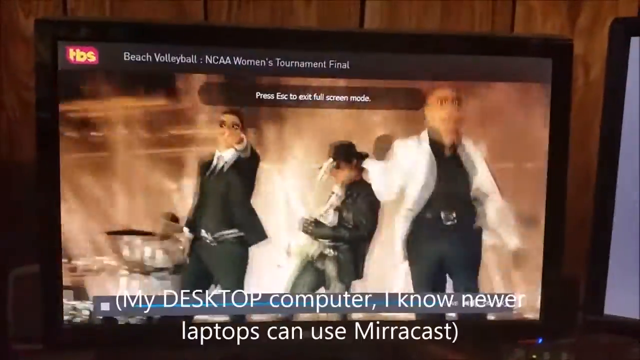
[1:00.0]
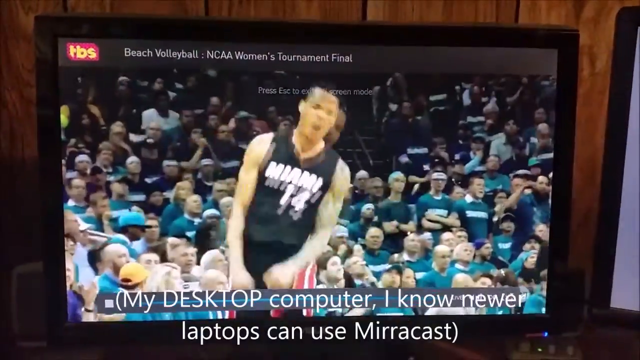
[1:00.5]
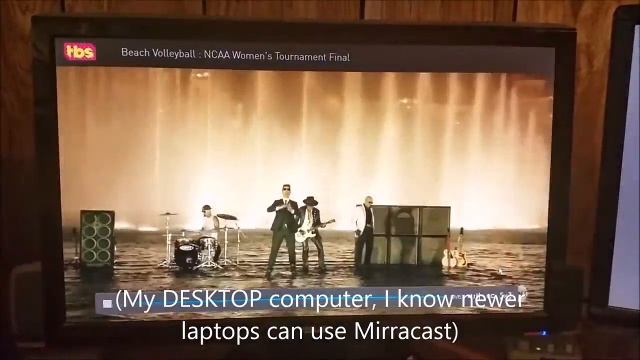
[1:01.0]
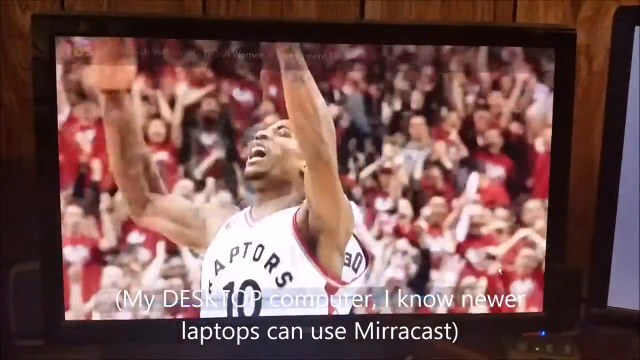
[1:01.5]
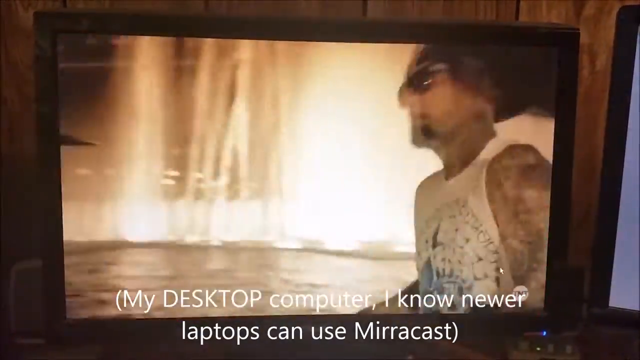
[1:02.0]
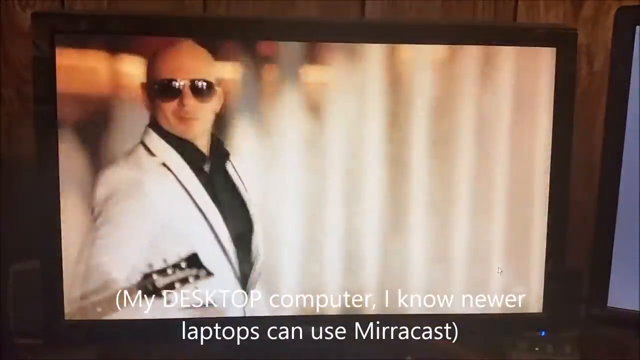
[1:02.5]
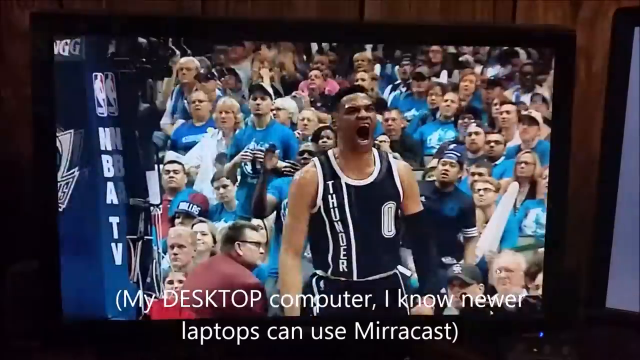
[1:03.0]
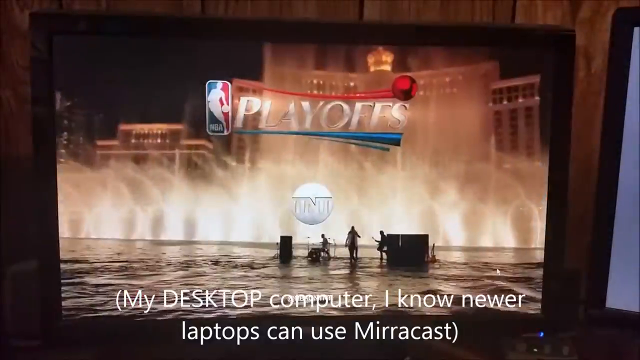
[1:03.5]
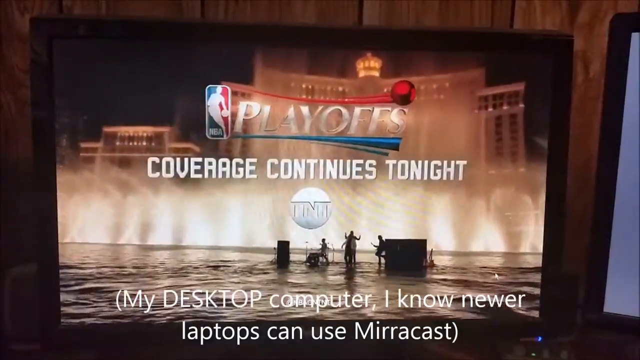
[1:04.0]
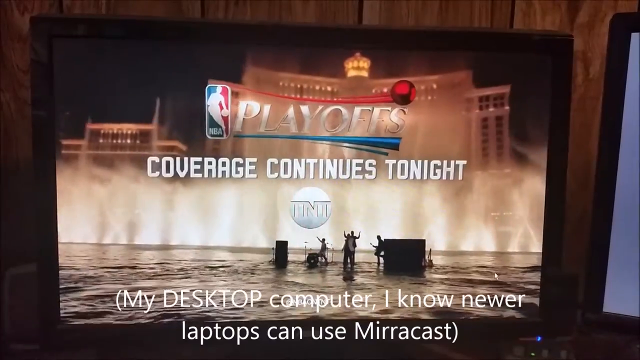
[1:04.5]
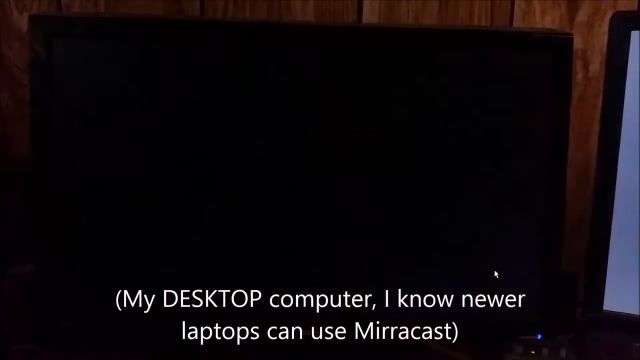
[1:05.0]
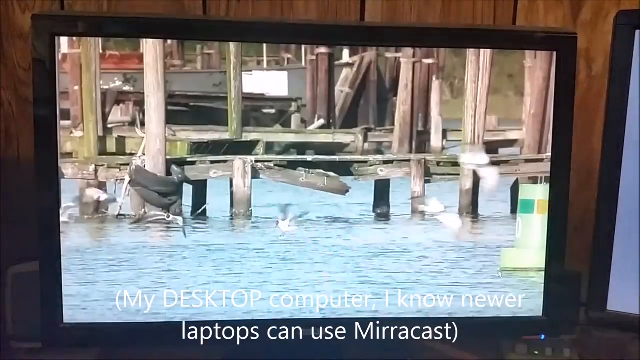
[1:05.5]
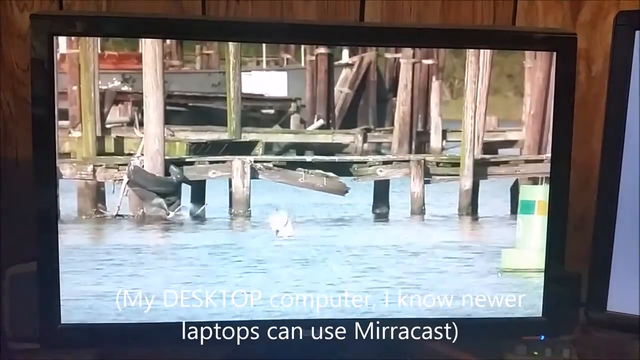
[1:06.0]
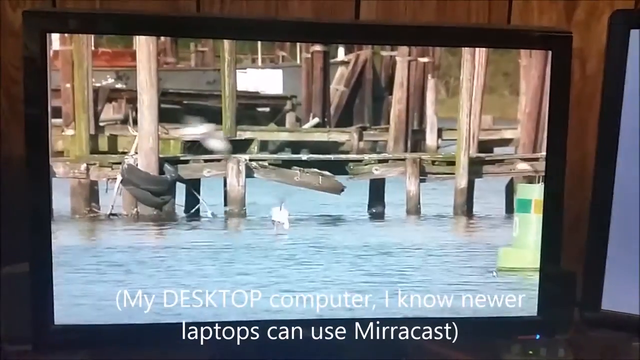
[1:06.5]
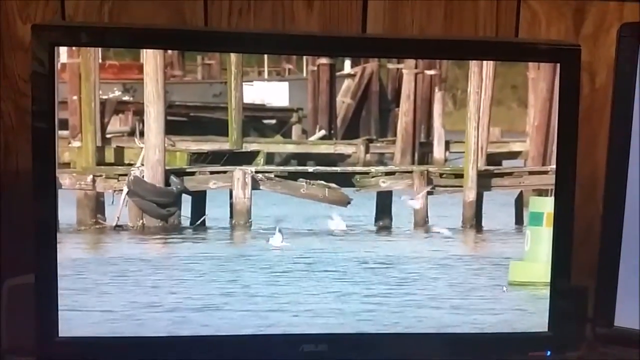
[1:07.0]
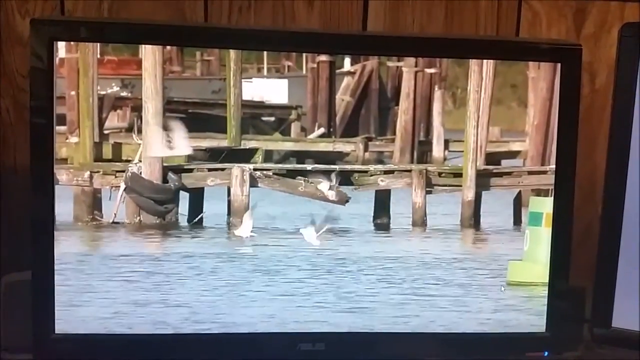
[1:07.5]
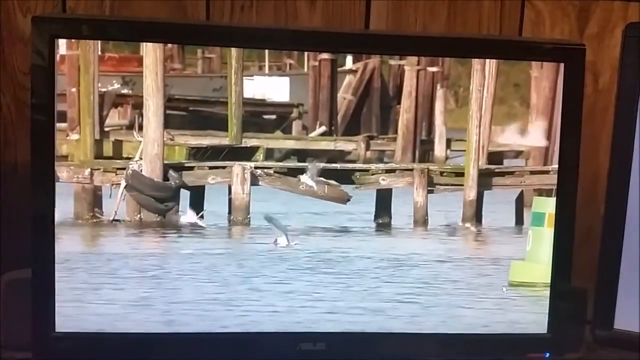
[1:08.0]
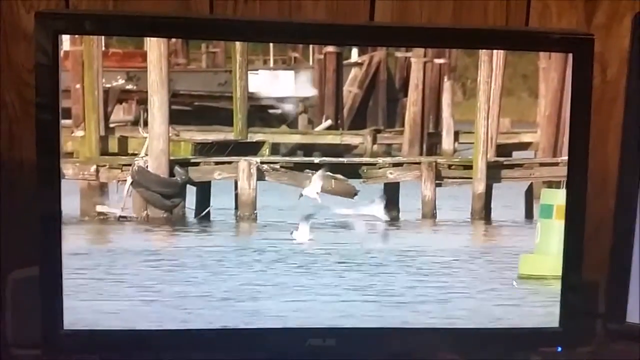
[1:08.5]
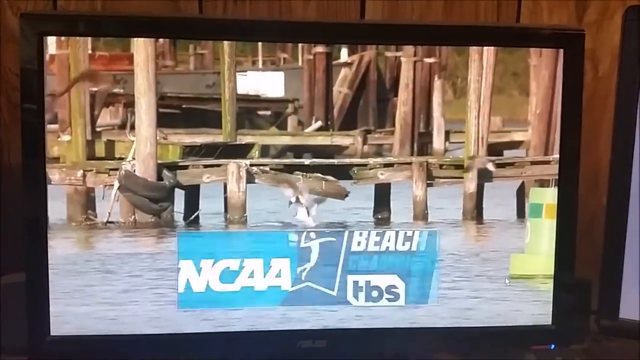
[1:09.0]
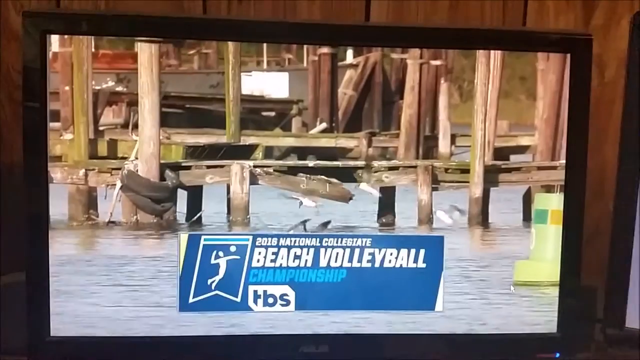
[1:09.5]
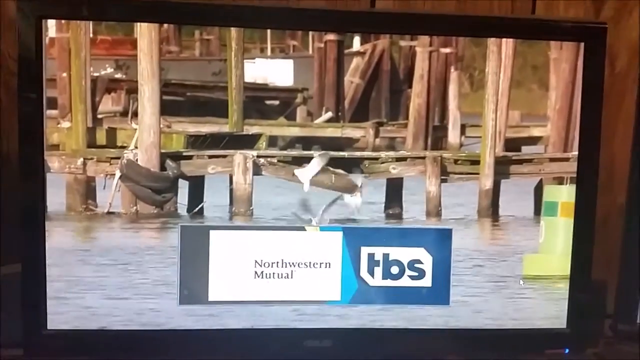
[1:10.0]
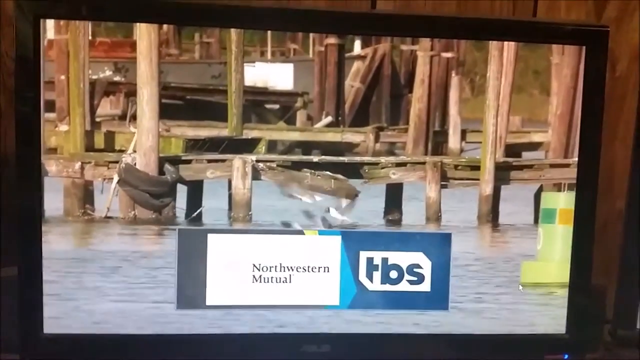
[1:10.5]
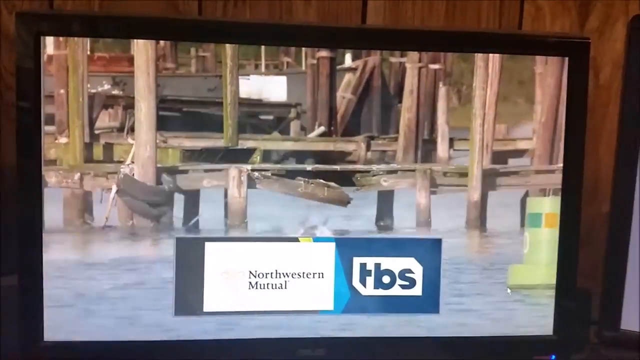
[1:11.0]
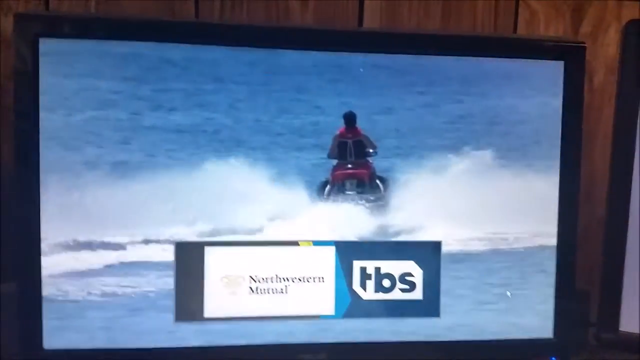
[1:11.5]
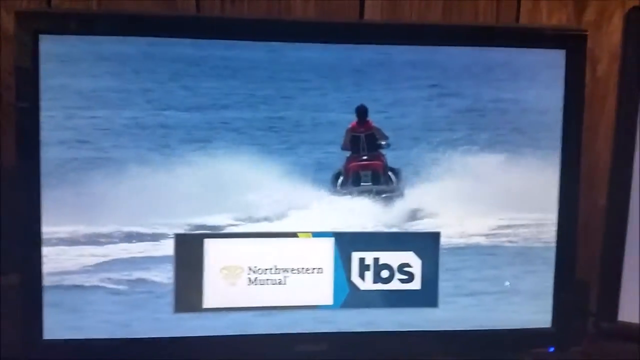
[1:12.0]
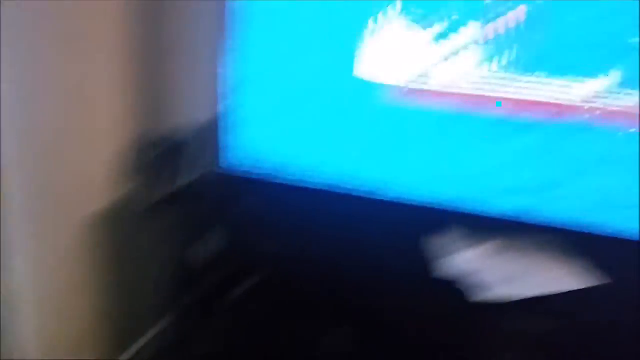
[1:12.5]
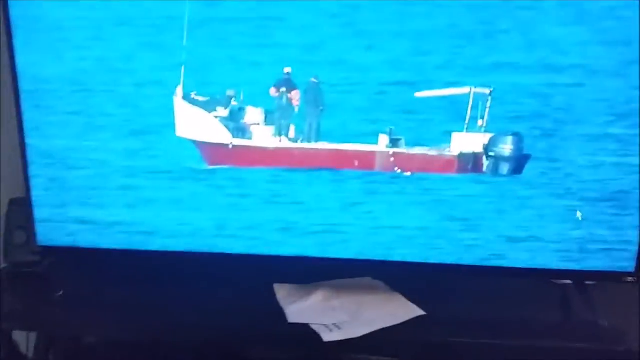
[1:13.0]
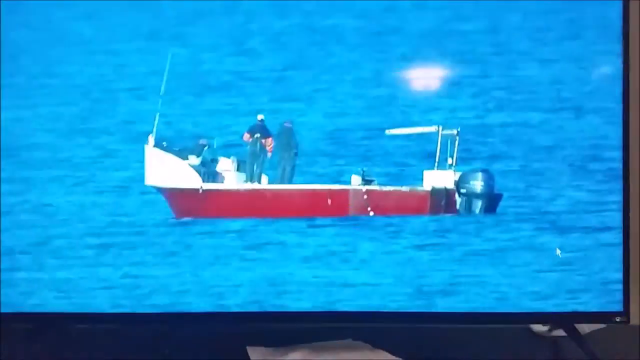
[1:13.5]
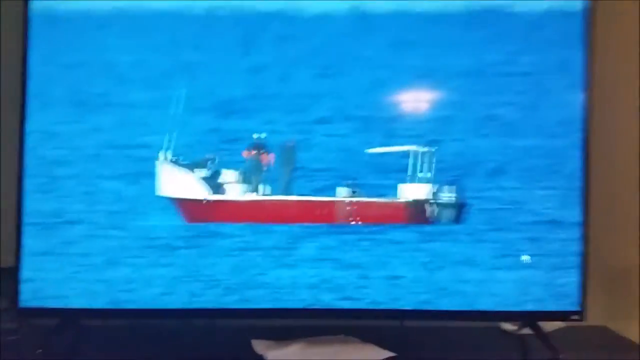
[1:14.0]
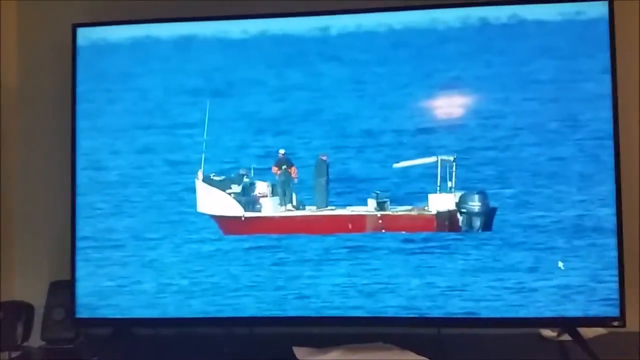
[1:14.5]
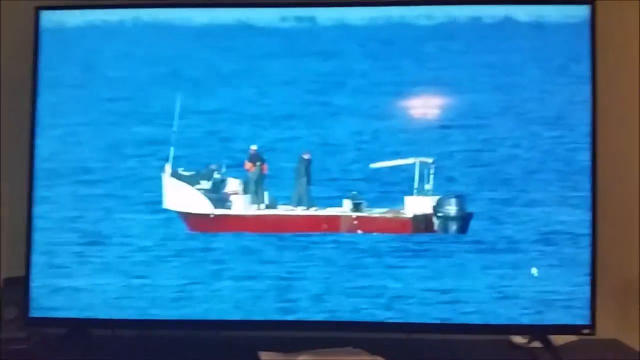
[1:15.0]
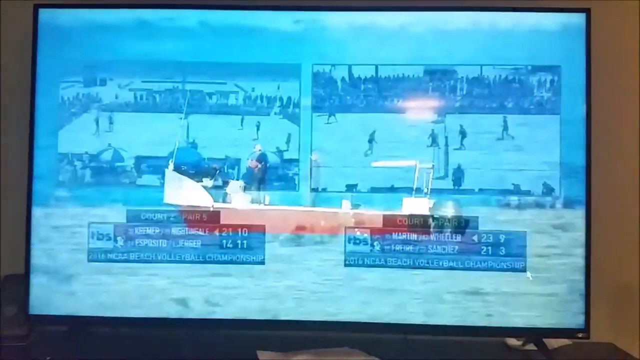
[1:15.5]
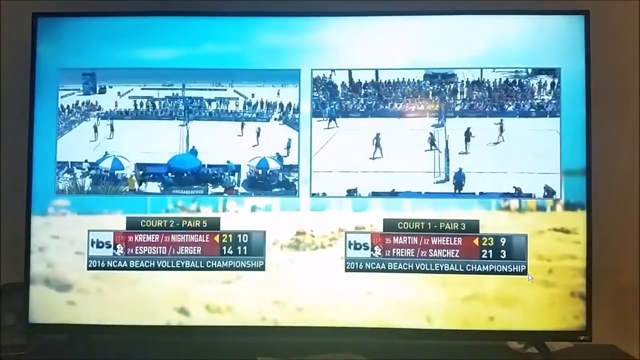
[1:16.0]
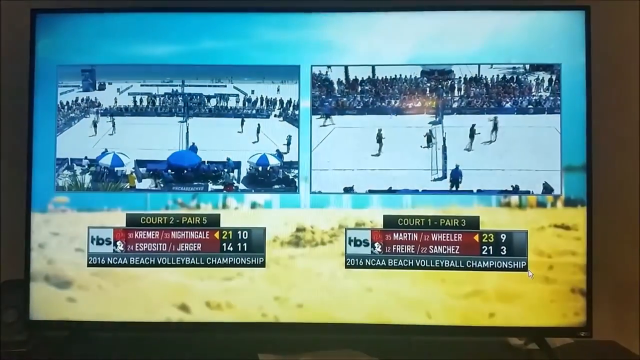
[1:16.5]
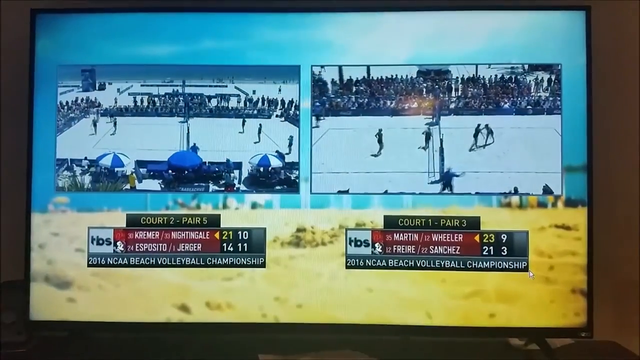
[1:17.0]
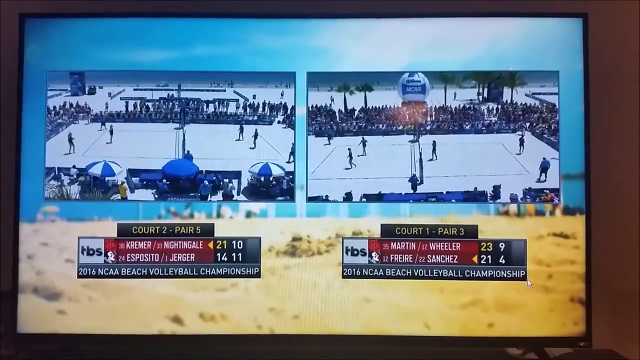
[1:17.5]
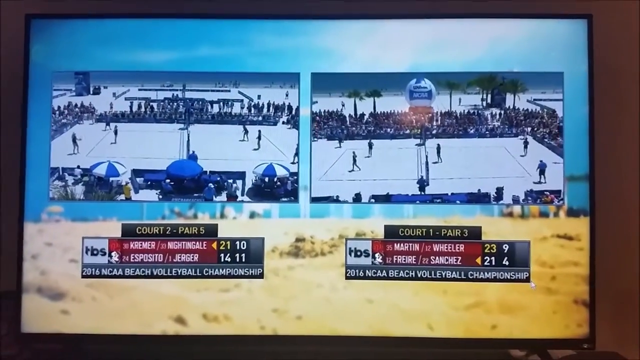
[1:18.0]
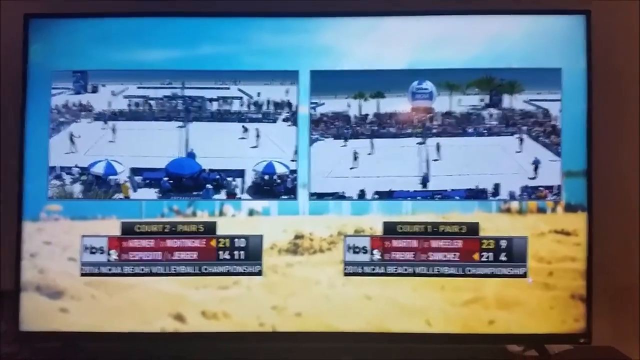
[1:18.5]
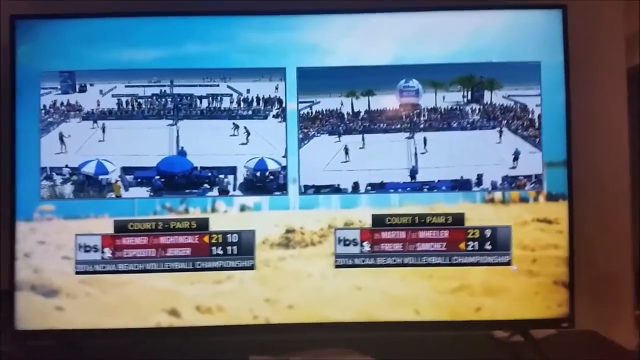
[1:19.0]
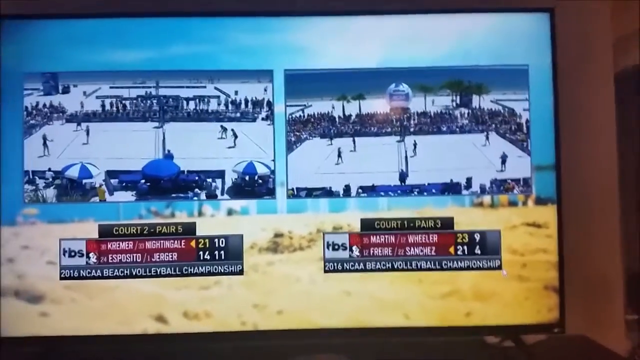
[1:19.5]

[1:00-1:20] A desktop screen is being filmed, showing various commercials, with a TBS logo at the very bottom of the screen. Various scenes appear, including two sports games on the left and right sides and a band playing on the TV screen. Text reads "my desktop computer." There is also a commercial for the NBA playoffs. The TV is in front of a lodge-type environment, with wooden logs hanging vertically behind the TV screen.